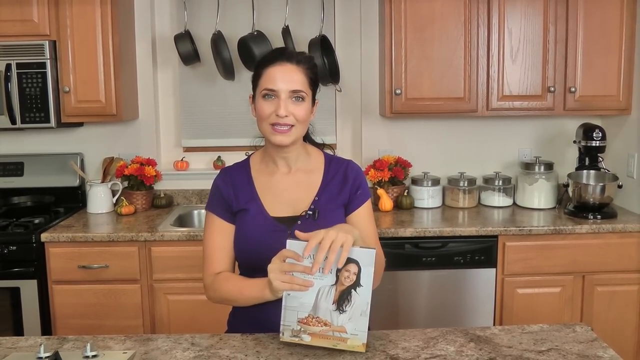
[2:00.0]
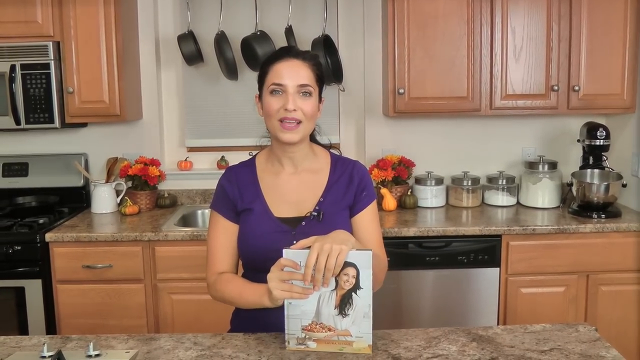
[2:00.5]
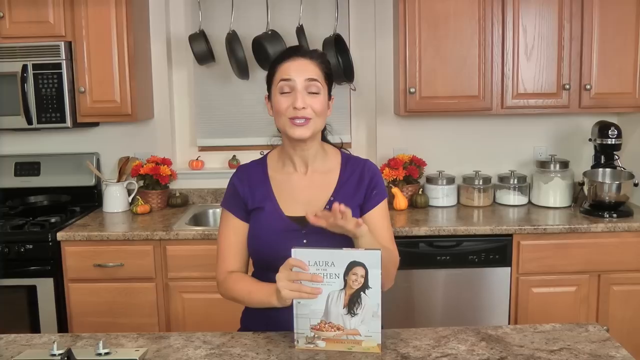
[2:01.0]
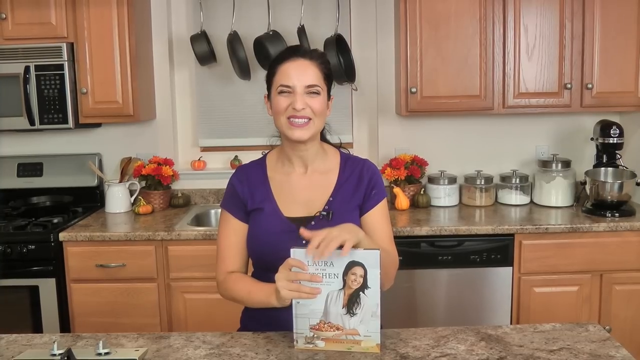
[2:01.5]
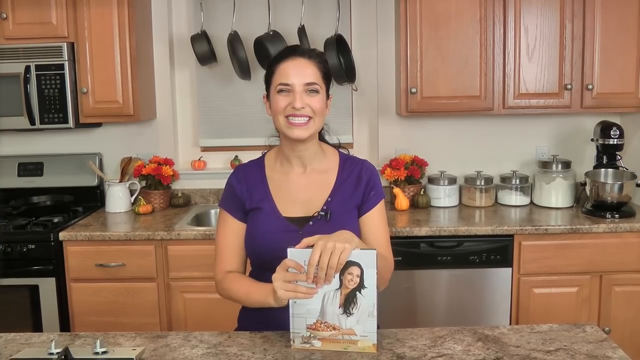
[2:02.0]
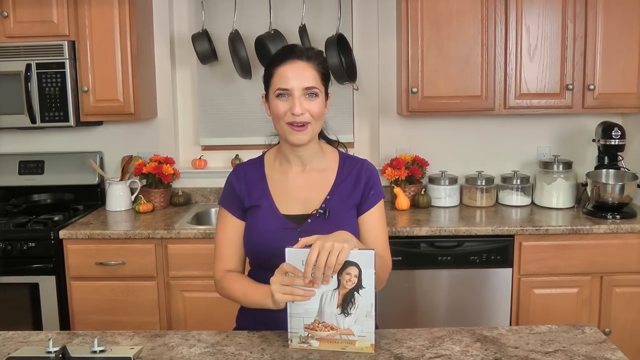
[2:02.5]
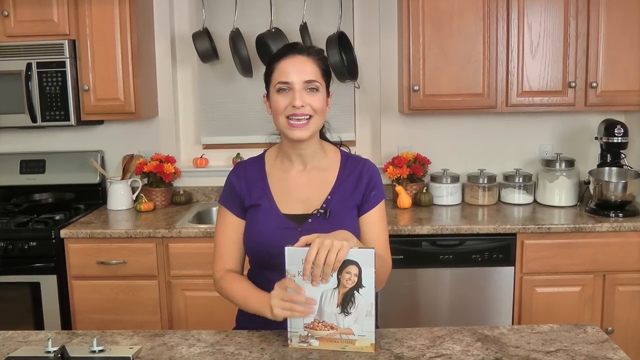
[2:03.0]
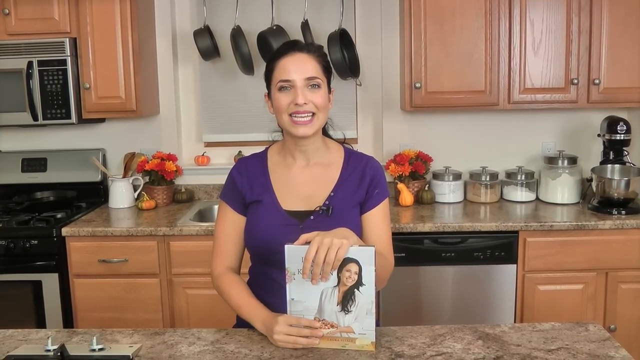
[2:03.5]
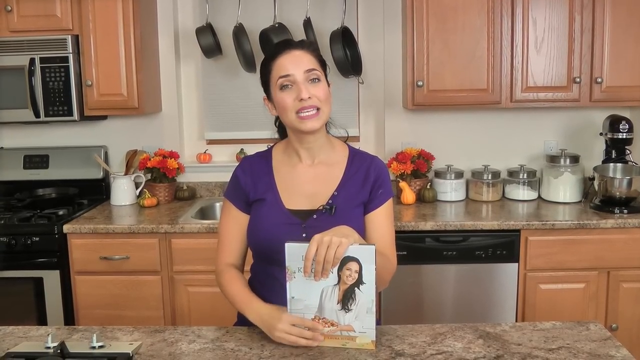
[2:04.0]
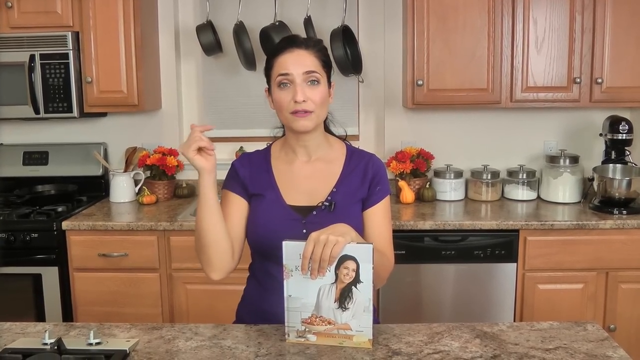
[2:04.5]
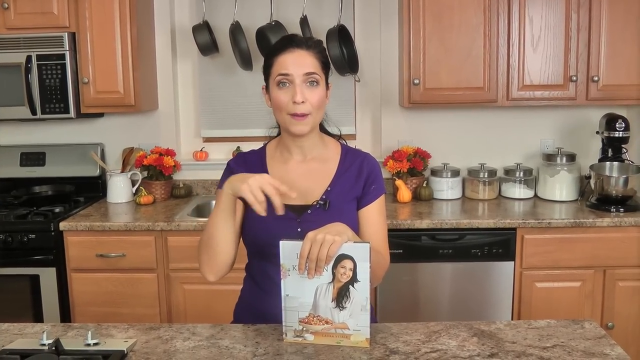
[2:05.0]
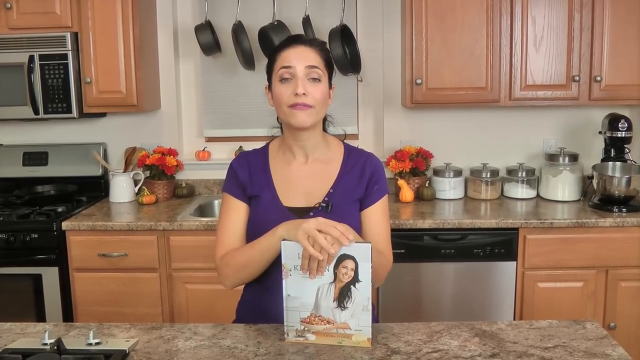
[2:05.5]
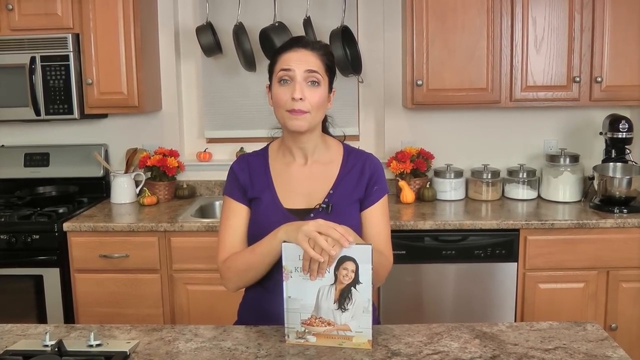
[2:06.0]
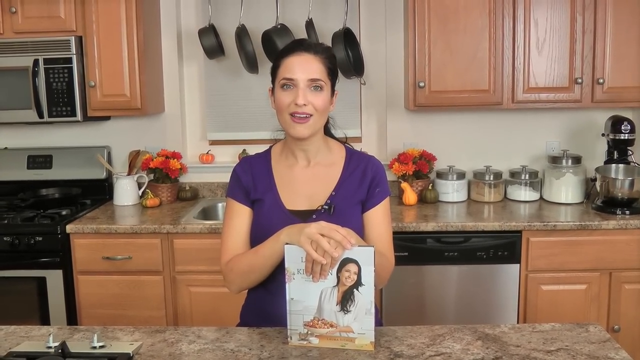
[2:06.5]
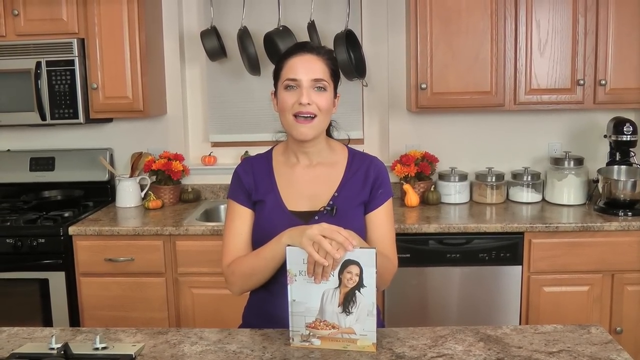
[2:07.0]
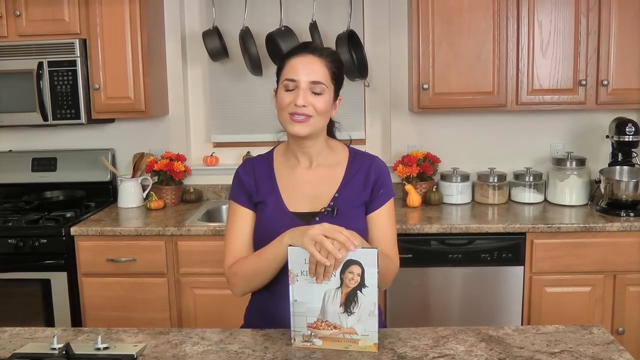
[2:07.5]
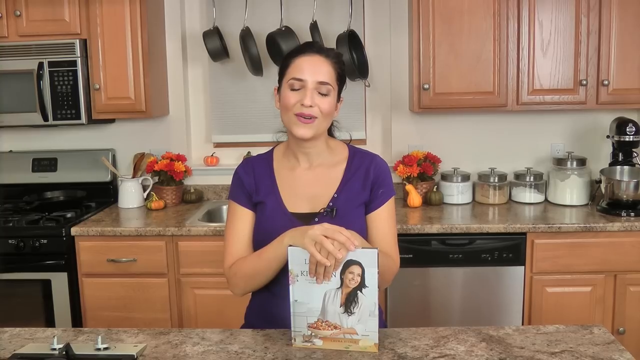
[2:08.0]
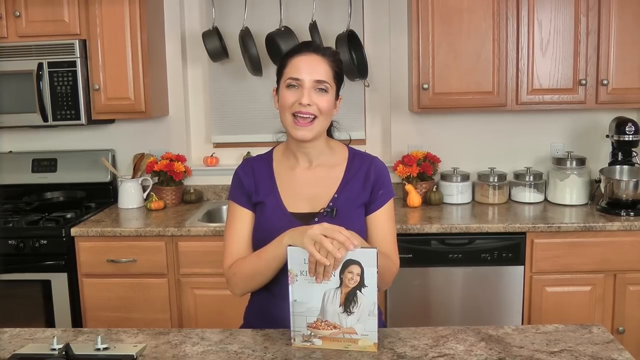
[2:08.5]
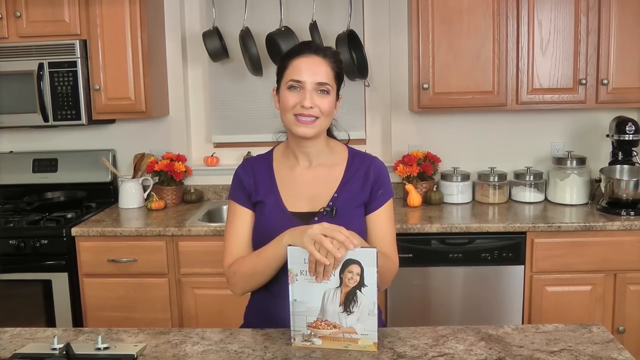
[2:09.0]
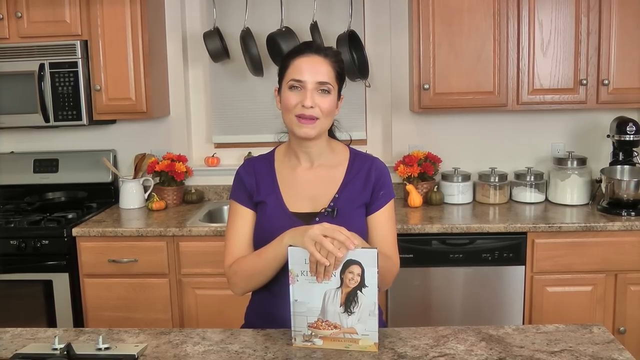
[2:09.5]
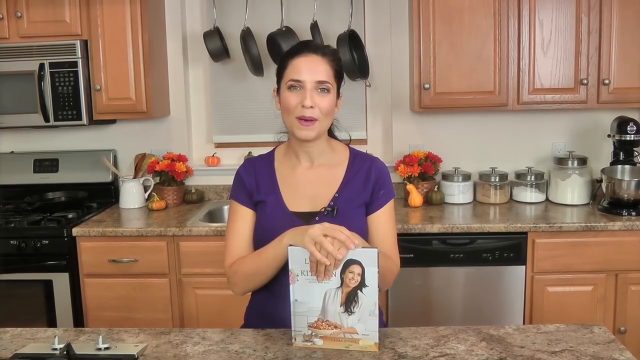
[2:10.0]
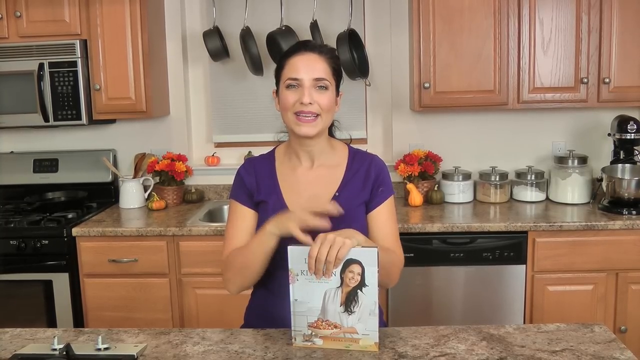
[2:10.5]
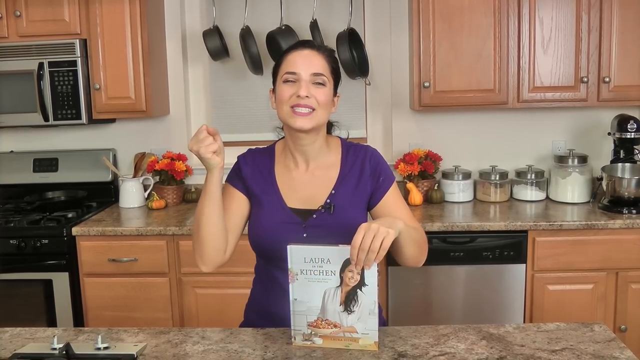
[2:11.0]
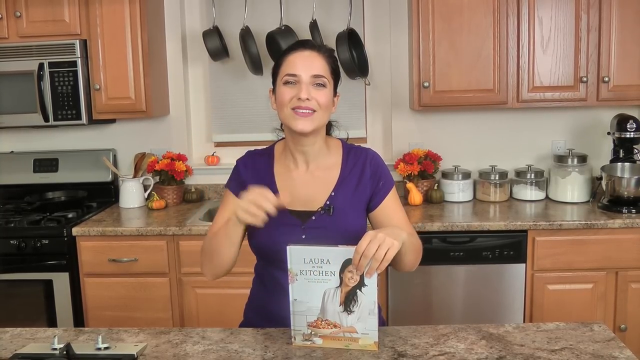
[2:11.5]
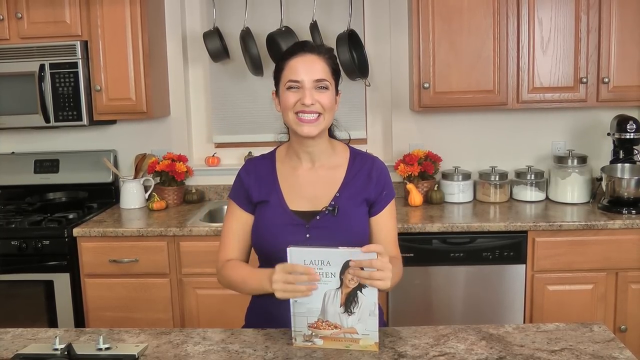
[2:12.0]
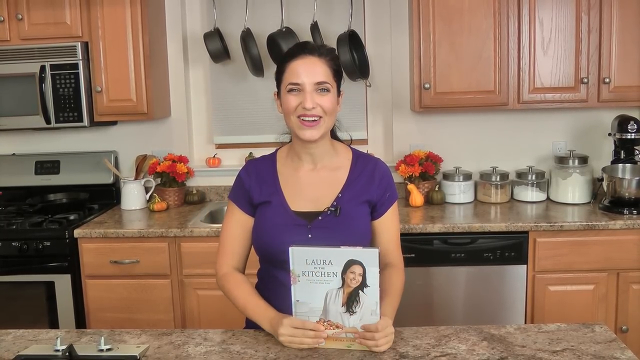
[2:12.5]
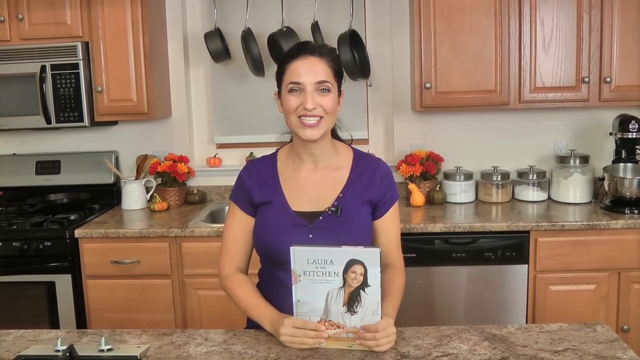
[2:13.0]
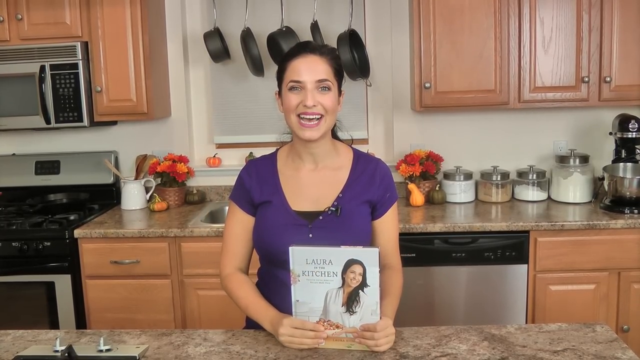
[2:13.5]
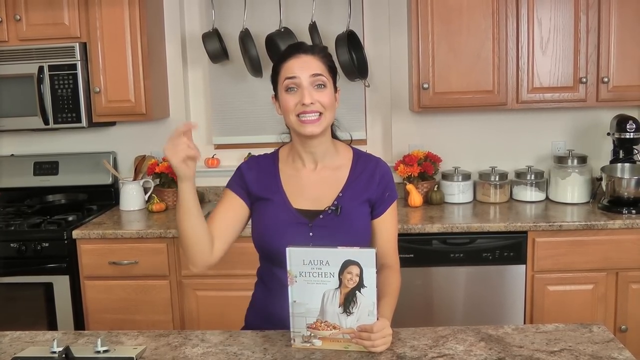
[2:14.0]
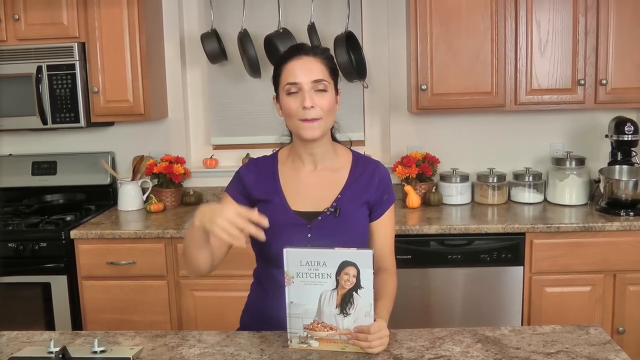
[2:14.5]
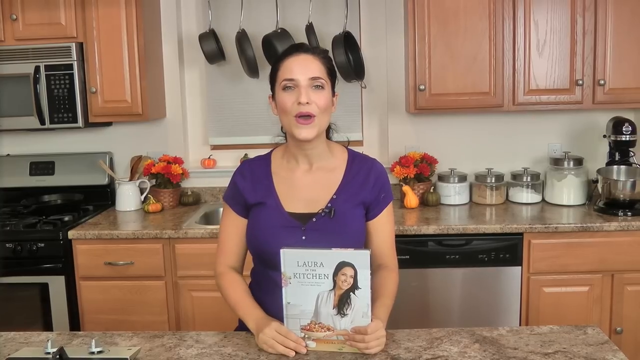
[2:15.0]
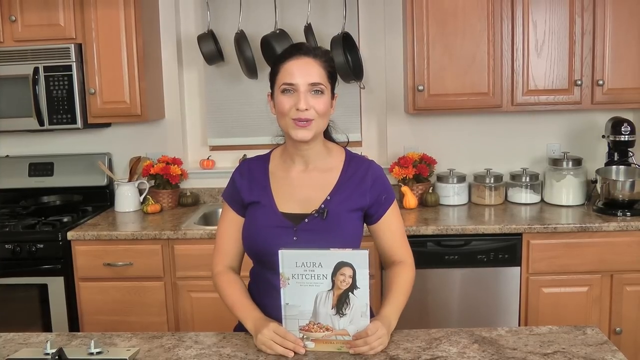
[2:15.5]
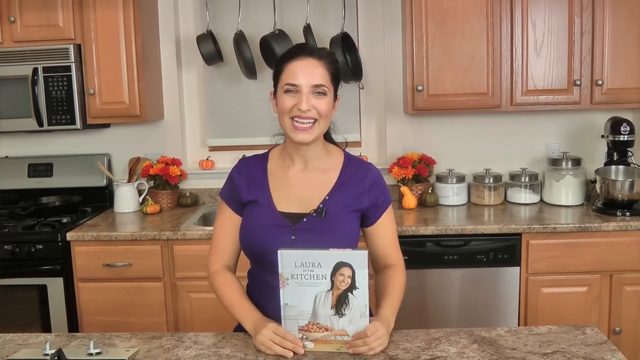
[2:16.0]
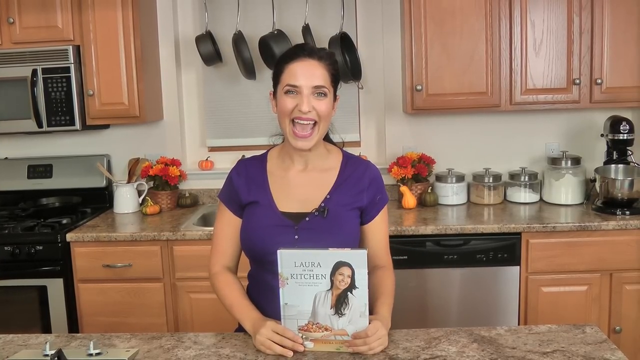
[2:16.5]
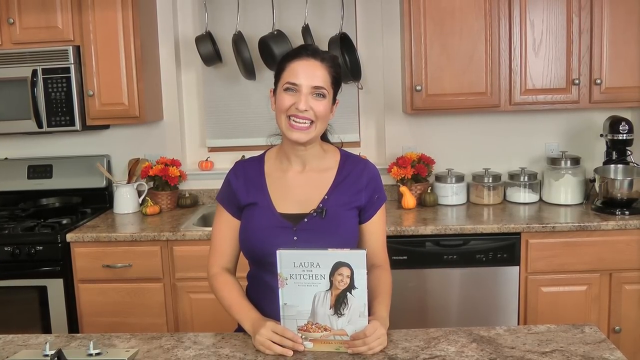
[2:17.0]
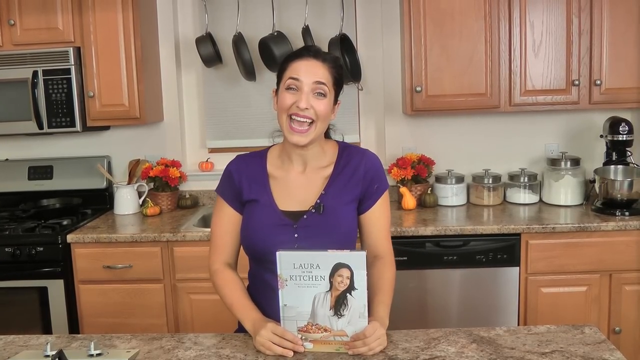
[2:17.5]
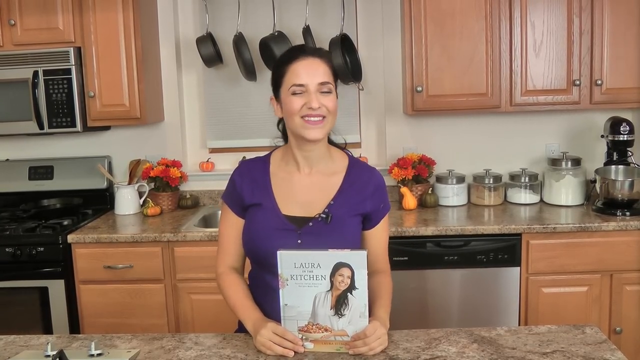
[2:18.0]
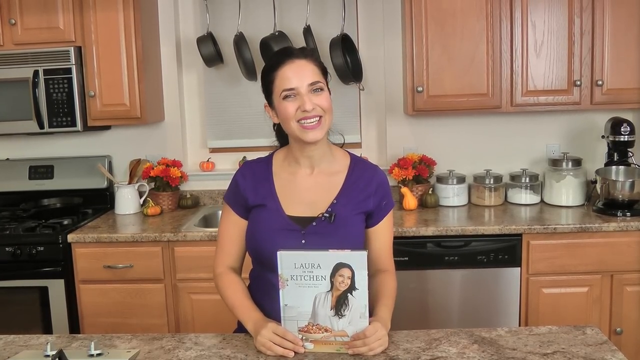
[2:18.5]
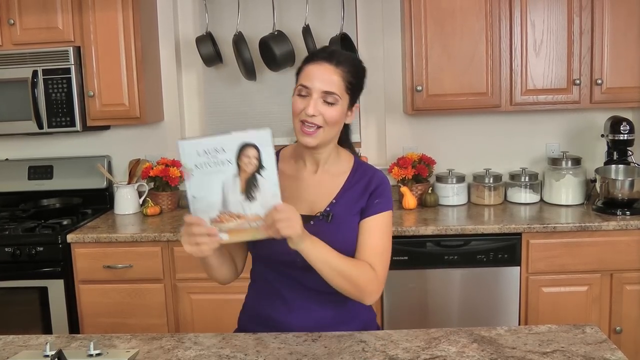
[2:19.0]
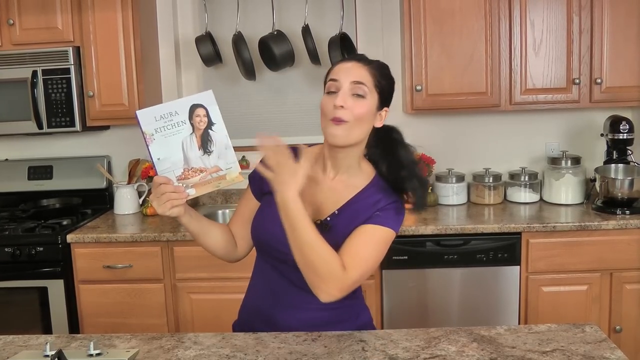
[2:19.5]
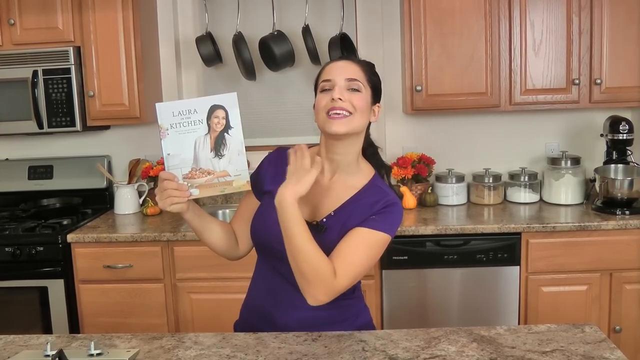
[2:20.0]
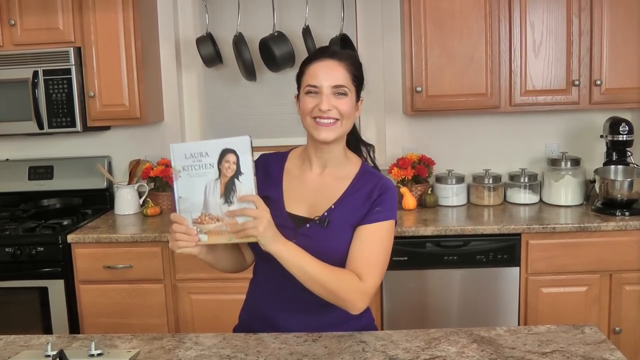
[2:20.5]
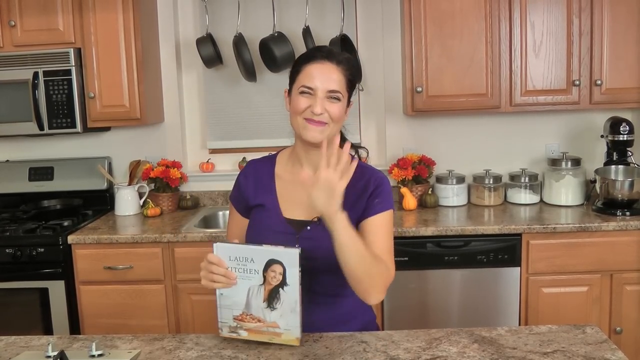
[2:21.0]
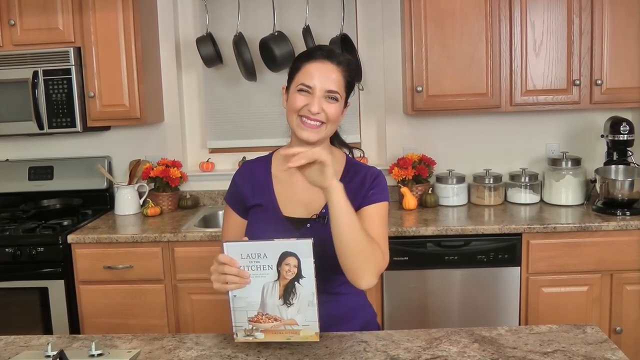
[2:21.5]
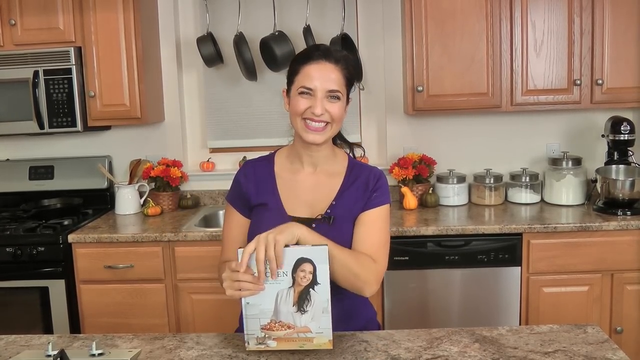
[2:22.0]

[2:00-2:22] A white woman with long black hair tied at the back wears a purple top with black and a white pattern, with a mic hanging on the top. She holds a book showing food and a woman with long hair. The kitchen has stoves, a microwave, a dishwasher, and brownish, varnished wooden cupboards, along with spices in containers, decorative flowers at the back, and a sink for washing dishes. In front of her is a table with a stove on it. She keeps talking while facing the camera, then waves her hands toward the camera, saying goodbye. Five black and silver pans of different sizes, small and medium, hang on the wall. Brown and yellow pumpkins are there, appearing to be a mix, including green and orange or maroon ones.